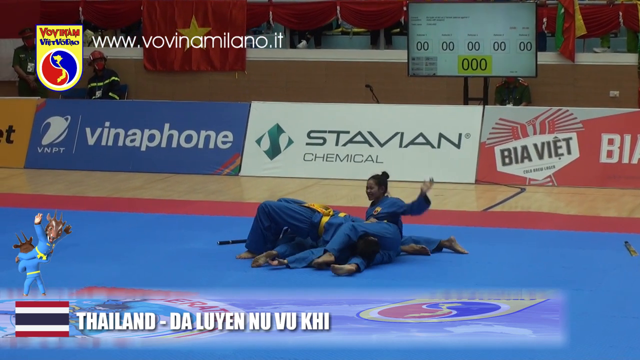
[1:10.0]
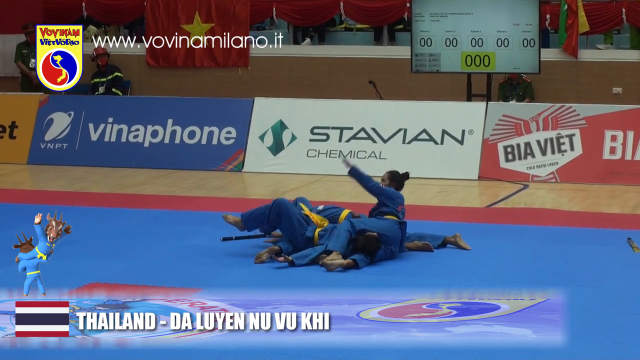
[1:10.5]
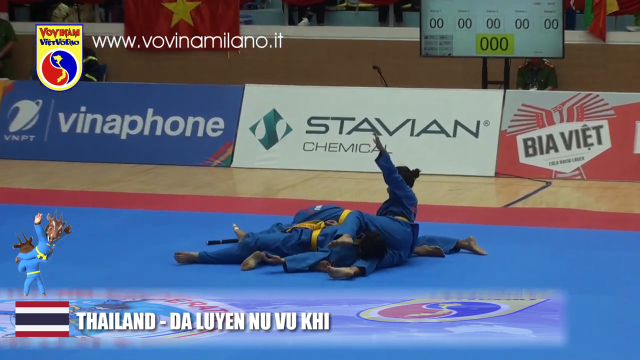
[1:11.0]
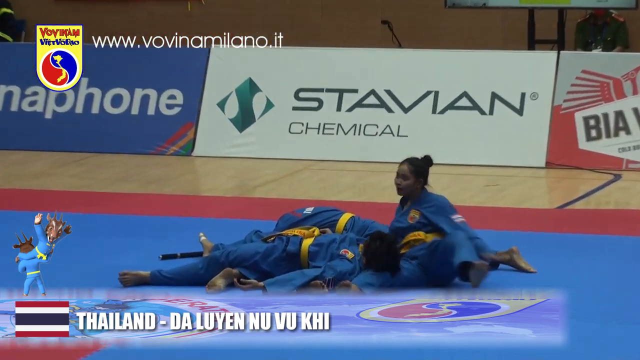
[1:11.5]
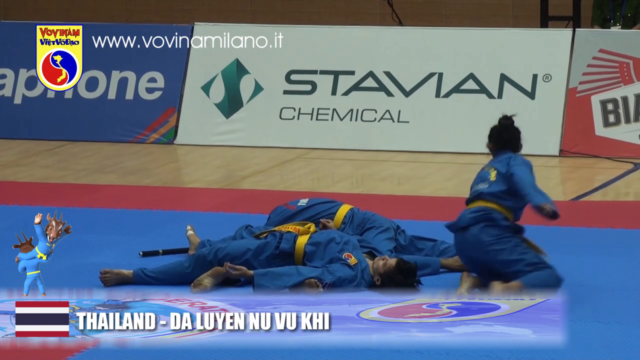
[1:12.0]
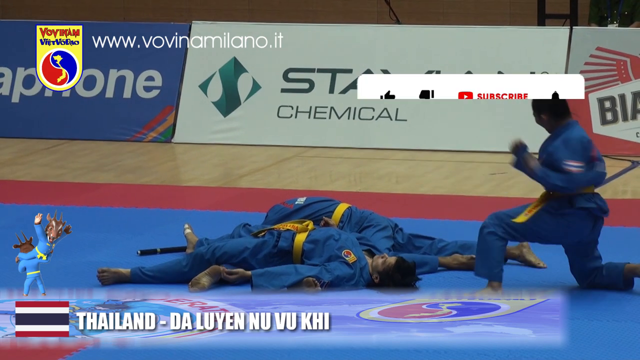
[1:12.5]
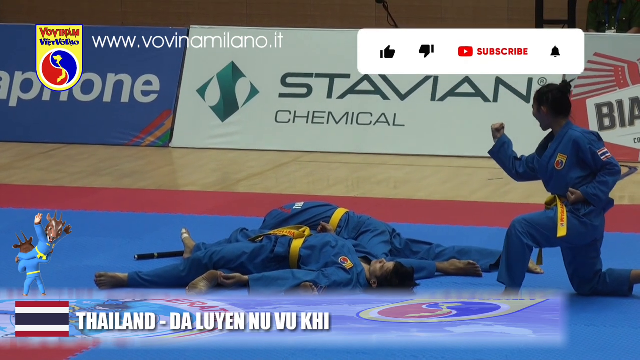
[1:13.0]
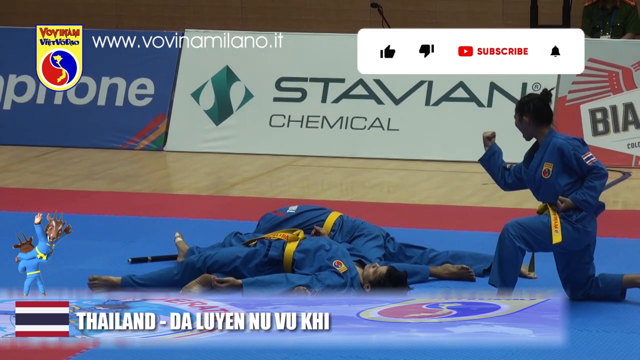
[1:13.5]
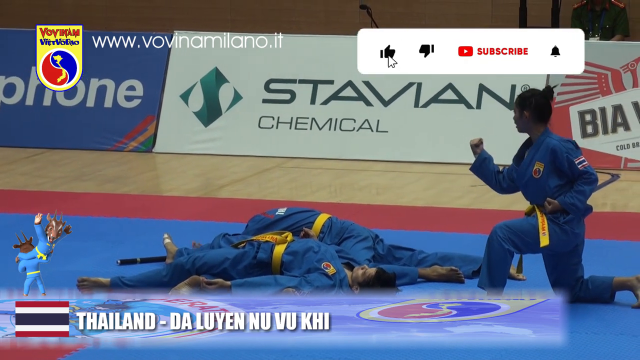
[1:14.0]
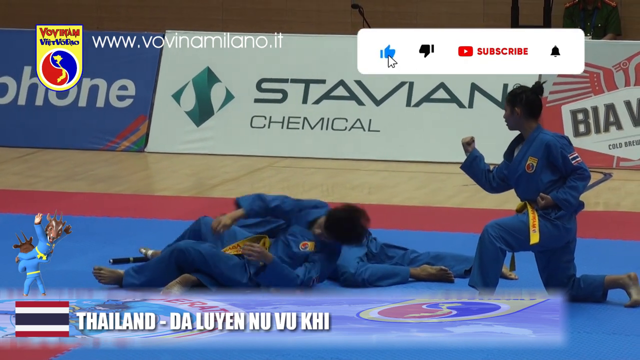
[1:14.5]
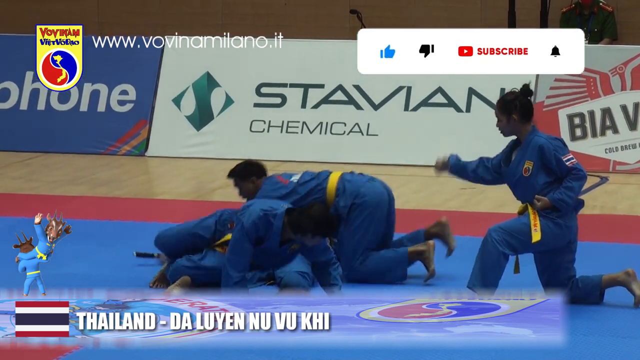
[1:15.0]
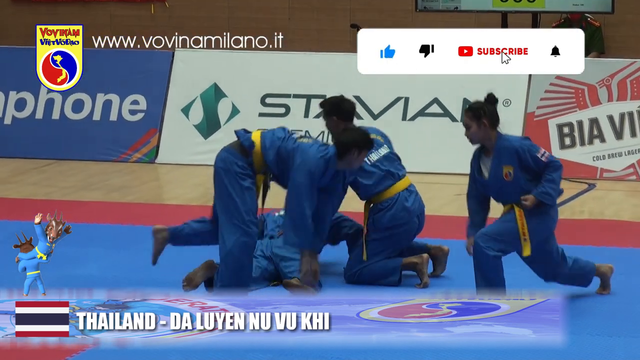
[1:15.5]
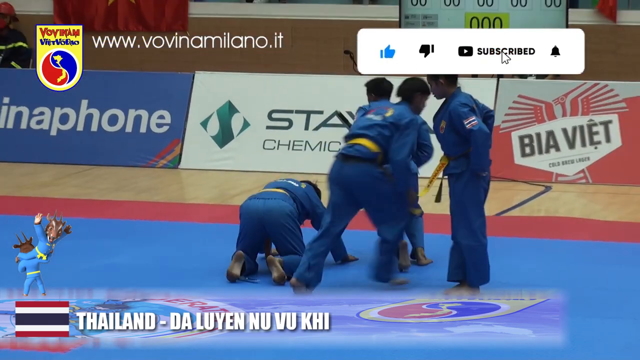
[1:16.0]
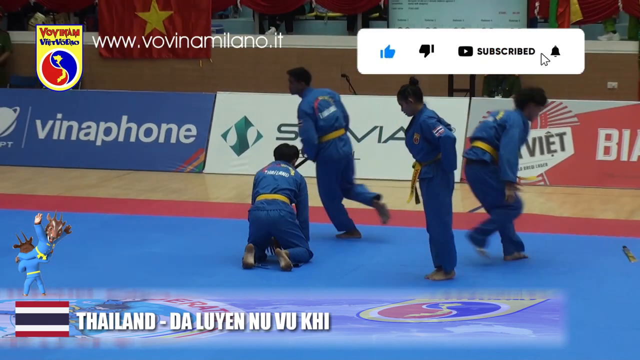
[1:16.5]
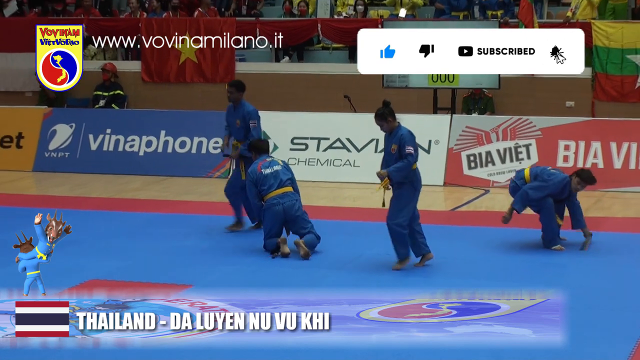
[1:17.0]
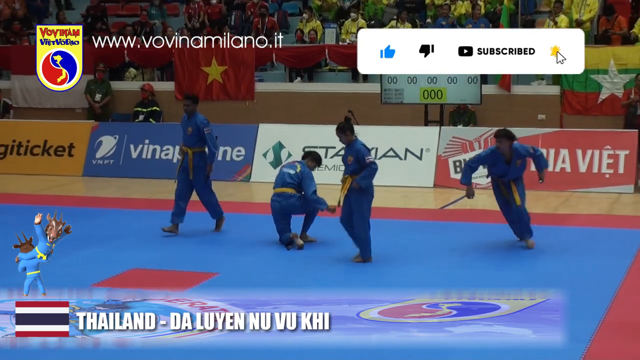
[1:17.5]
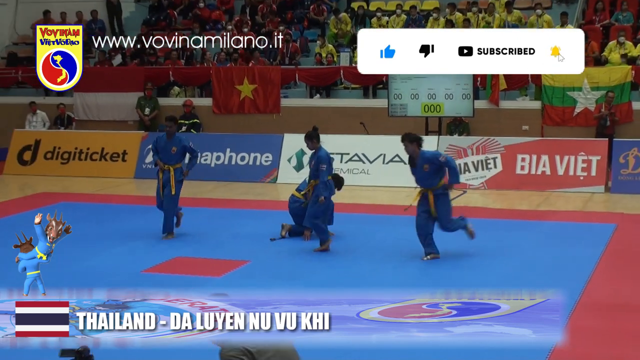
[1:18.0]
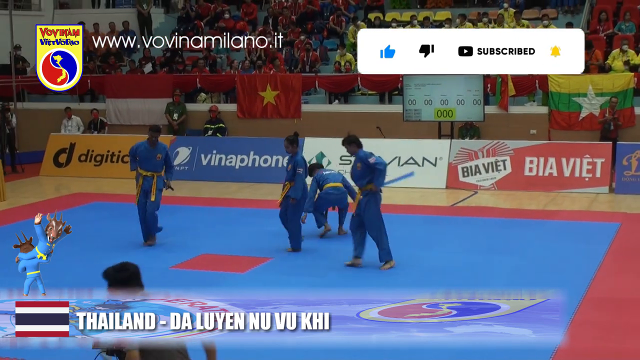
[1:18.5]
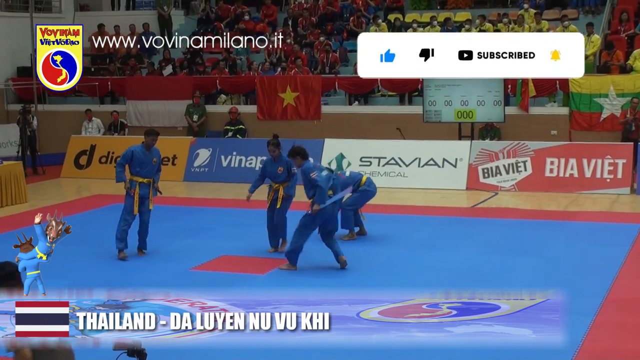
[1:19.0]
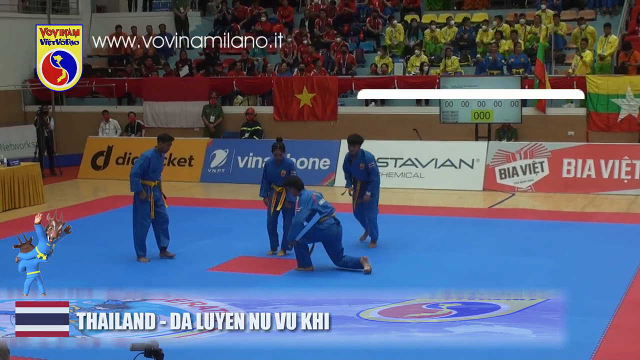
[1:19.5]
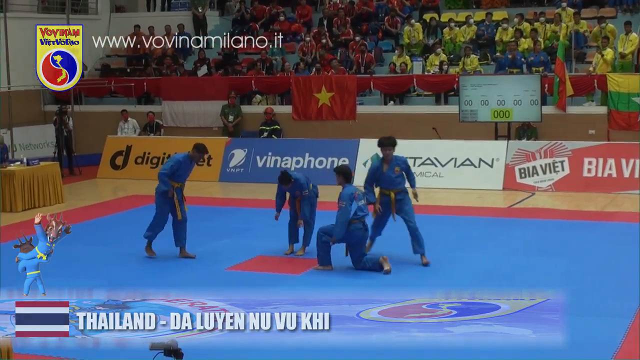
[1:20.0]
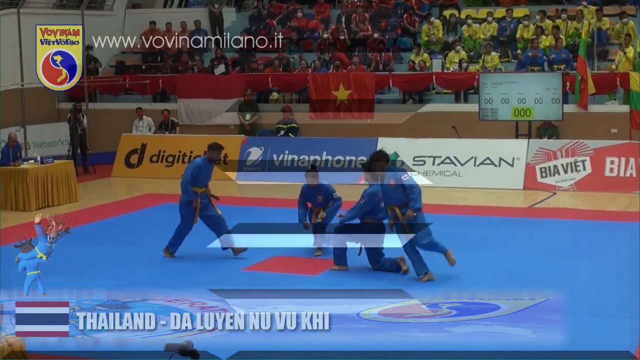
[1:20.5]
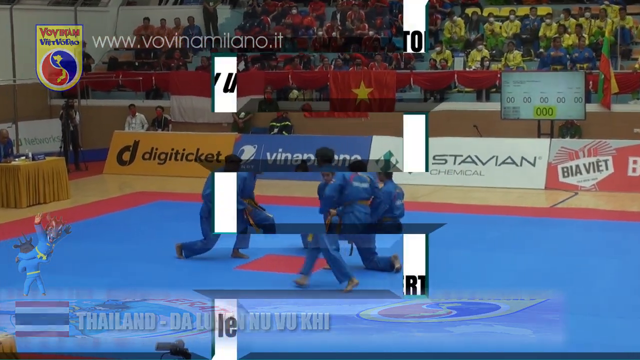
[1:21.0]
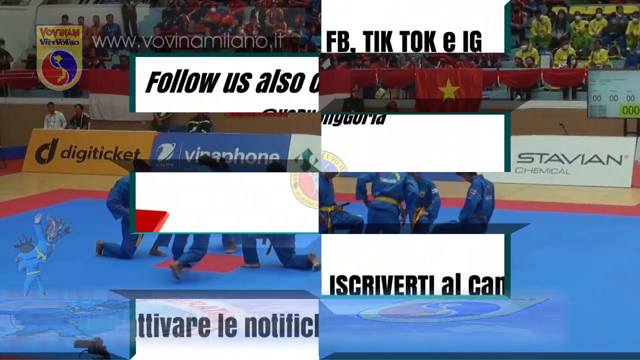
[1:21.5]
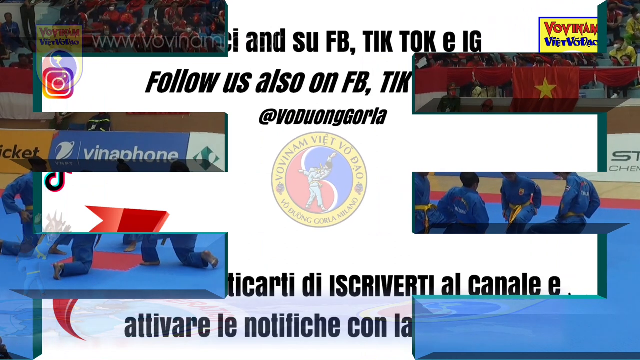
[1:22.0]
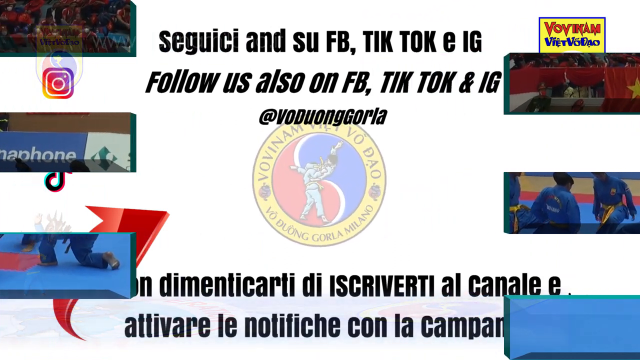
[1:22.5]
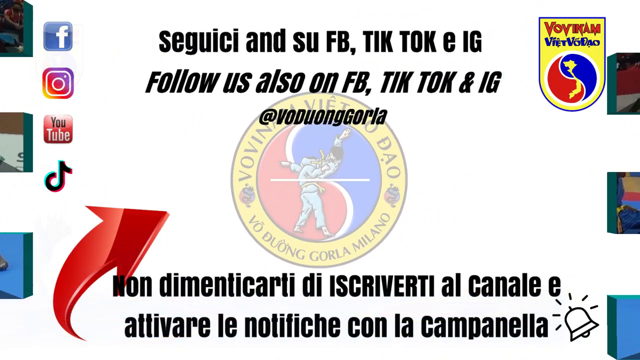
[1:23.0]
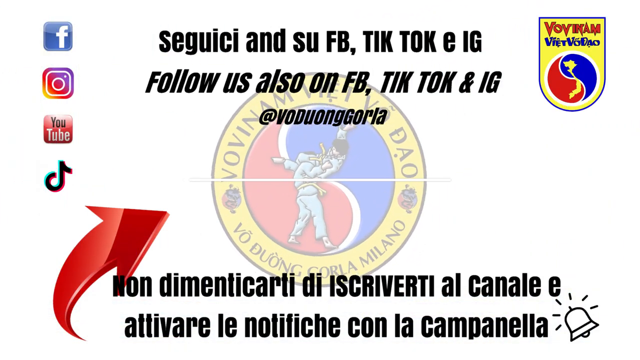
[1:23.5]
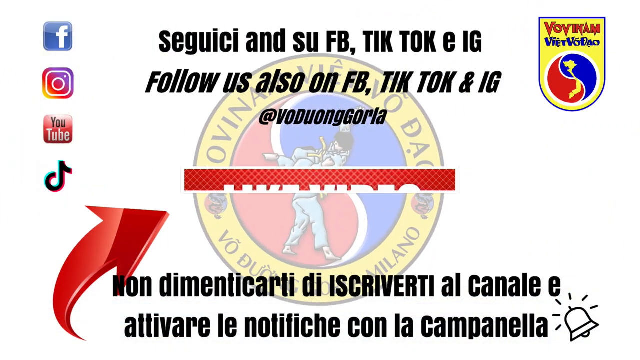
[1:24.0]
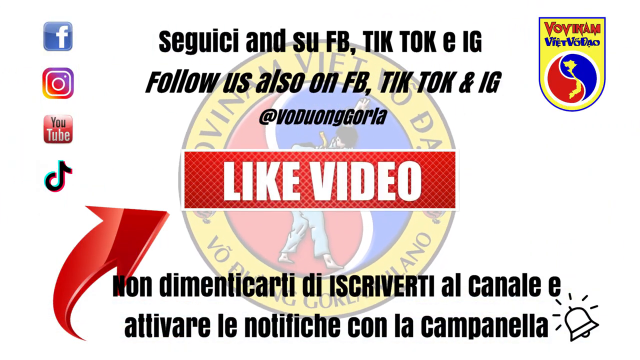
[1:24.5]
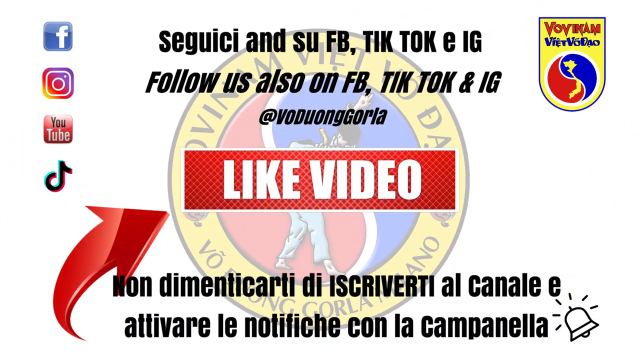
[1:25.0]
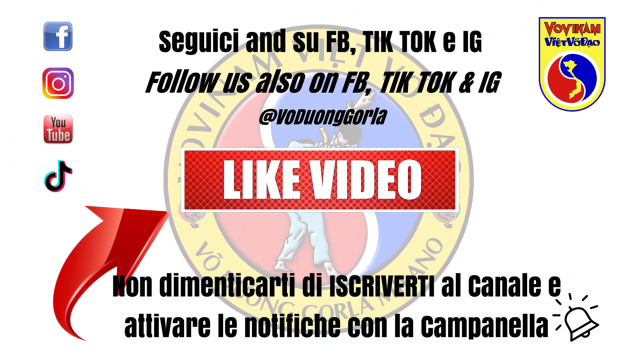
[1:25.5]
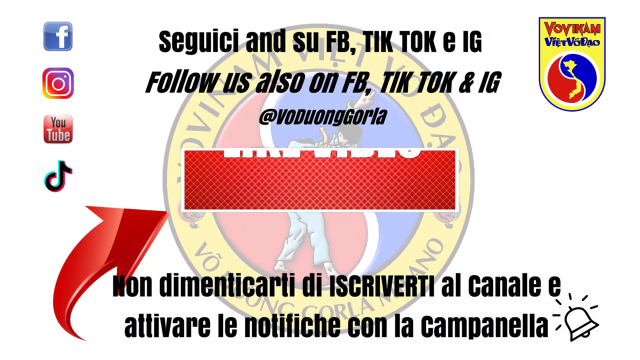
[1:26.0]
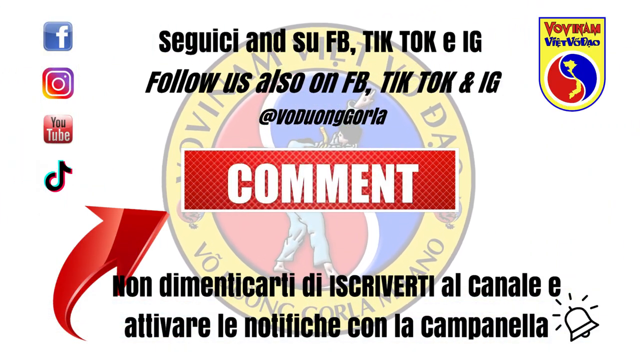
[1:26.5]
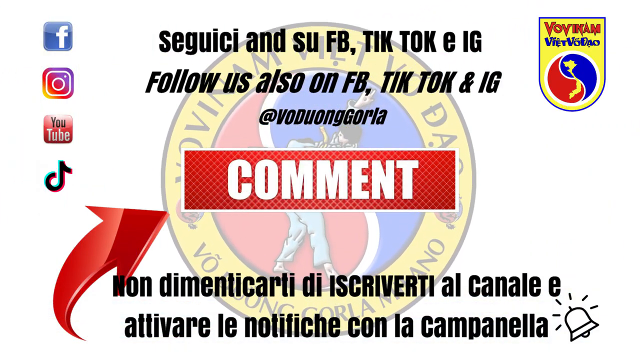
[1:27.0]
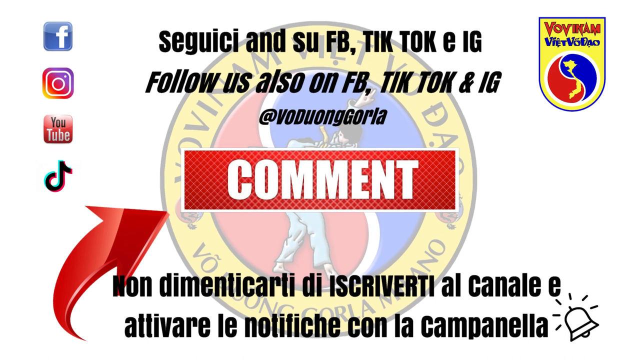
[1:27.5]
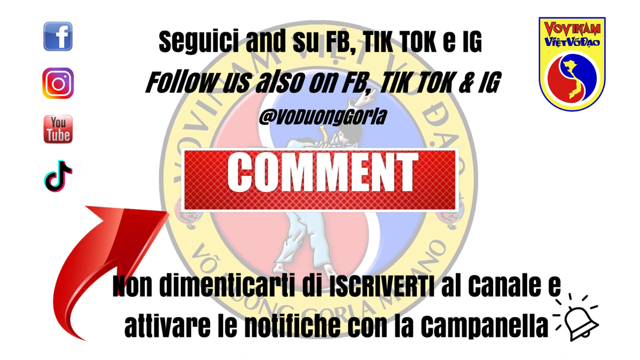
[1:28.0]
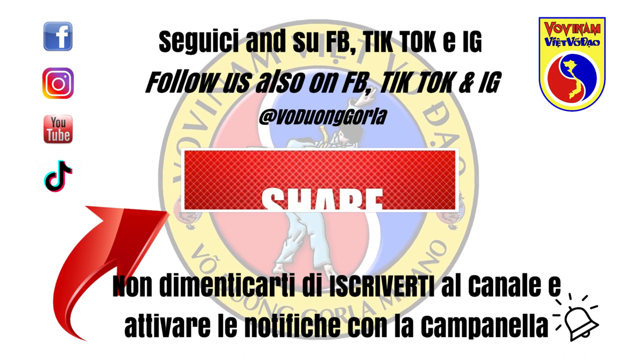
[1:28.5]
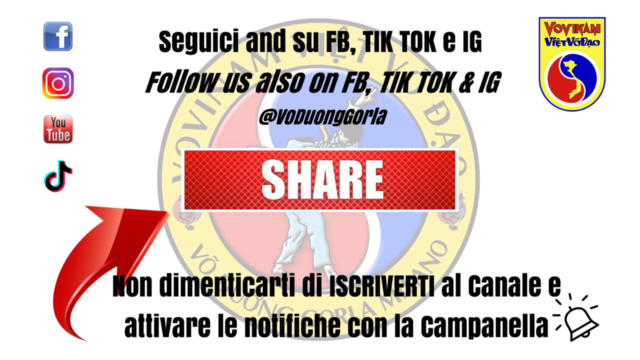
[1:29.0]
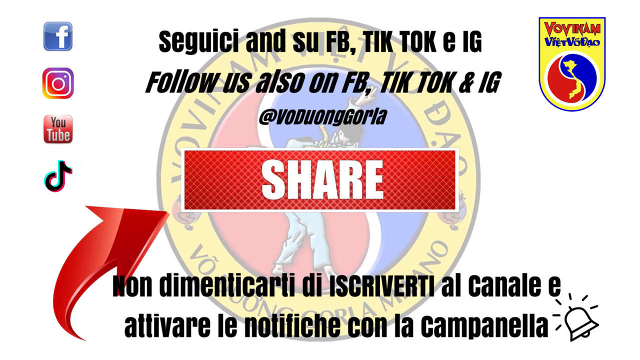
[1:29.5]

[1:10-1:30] A female martial artist gestures a sign of victory after defeating her three male attackers, who lie on the floor mat. The footage is from a martial arts performance or competition inside a stadium. The video ends with the logos of Facebook, Instagram, YouTube and TikTok in a column in the left corner. In the center is a logo showing a person putting a man in a leg grip; one person is up in the air, about to flip the other onto the ground, and Vietnamese text runs along a concentric circle around the emblem. Italian text is printed at the top and bottom of the screen, and the screen says "follow us also on Facebook, TikTok and IG".